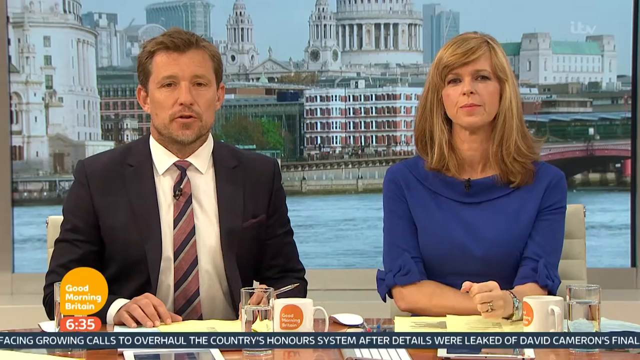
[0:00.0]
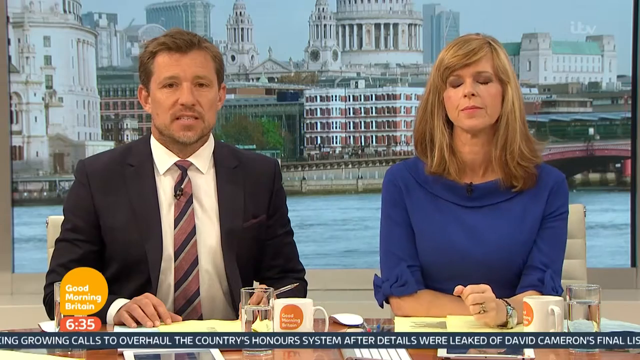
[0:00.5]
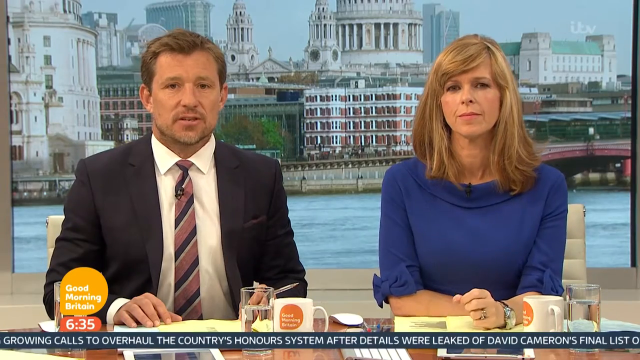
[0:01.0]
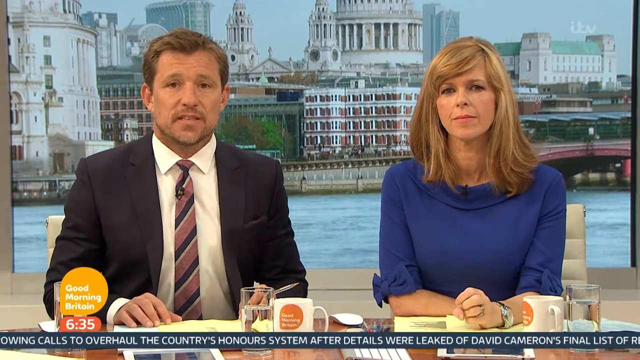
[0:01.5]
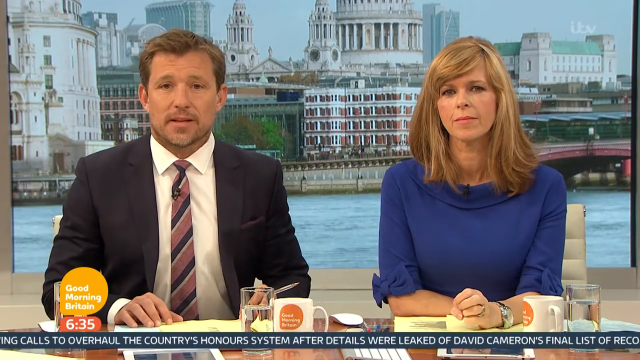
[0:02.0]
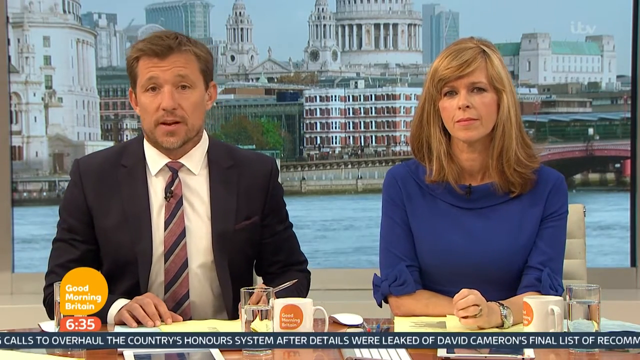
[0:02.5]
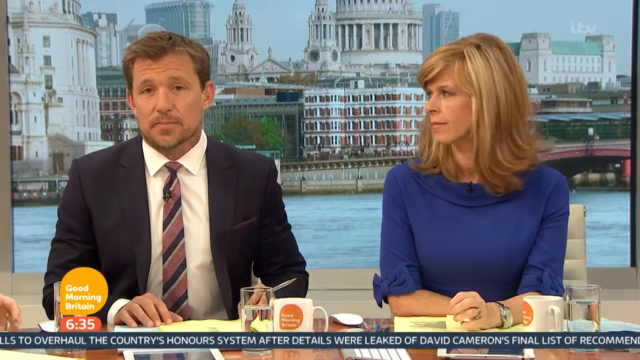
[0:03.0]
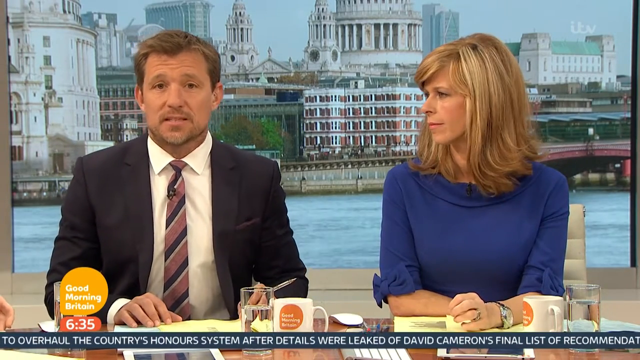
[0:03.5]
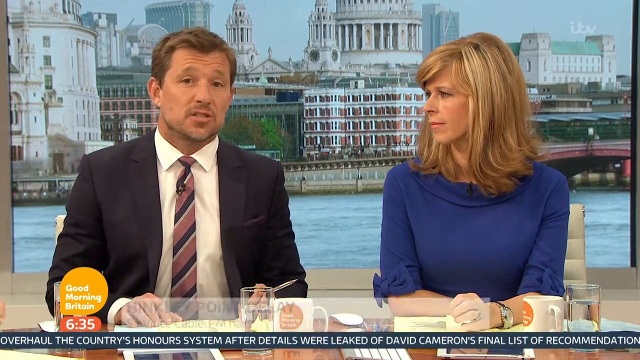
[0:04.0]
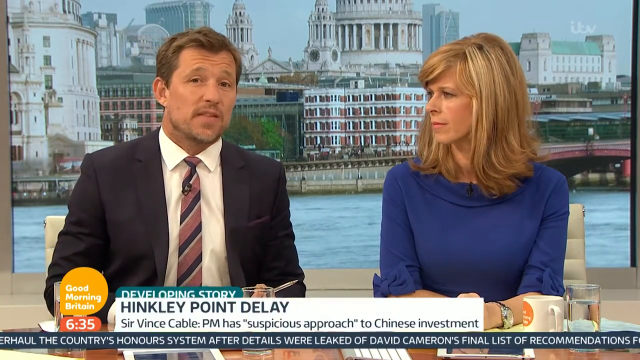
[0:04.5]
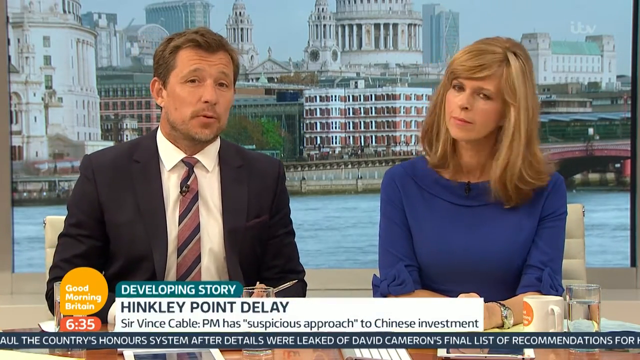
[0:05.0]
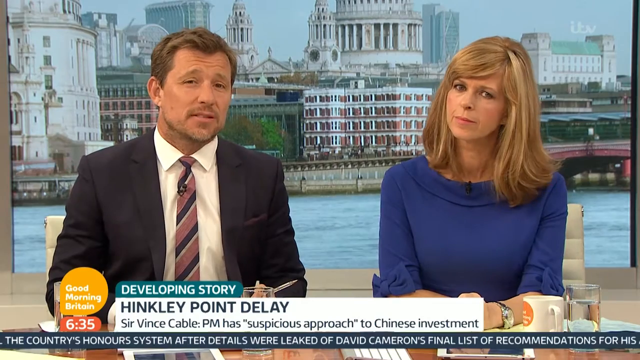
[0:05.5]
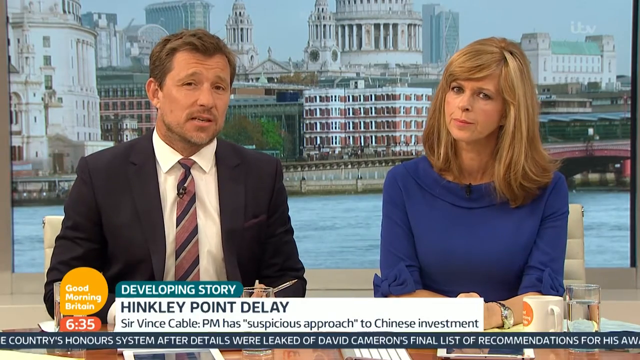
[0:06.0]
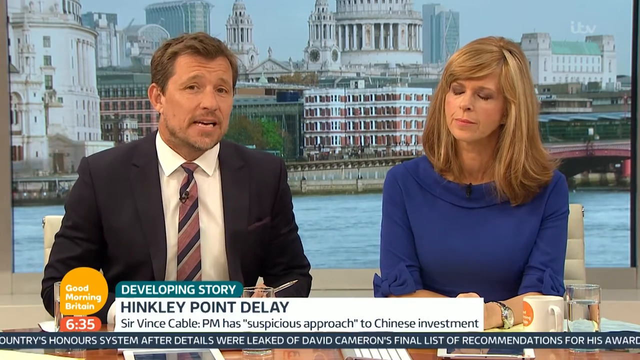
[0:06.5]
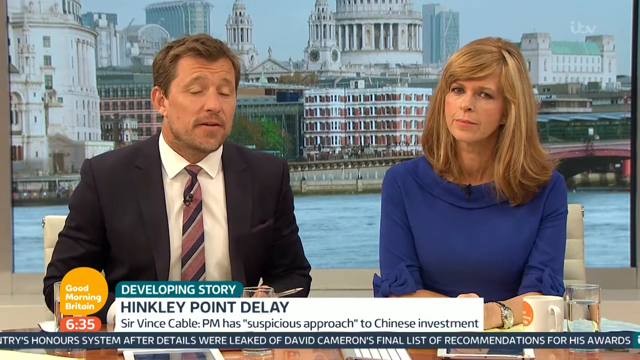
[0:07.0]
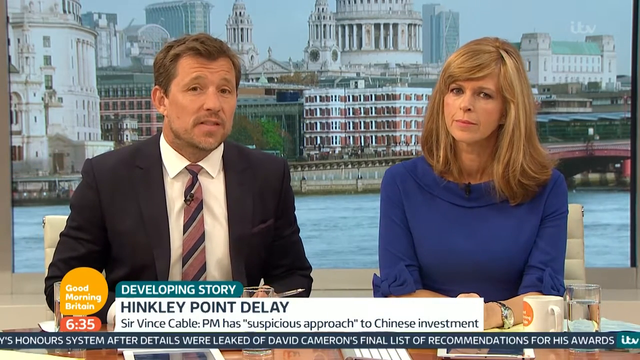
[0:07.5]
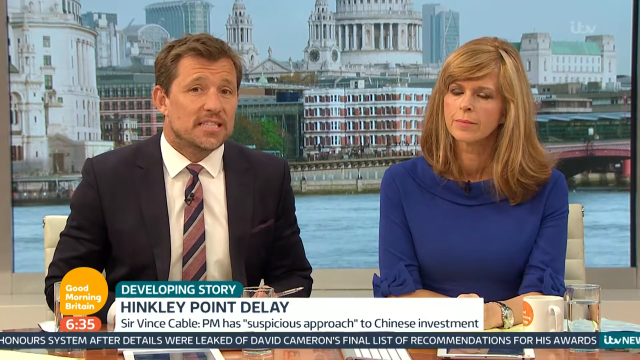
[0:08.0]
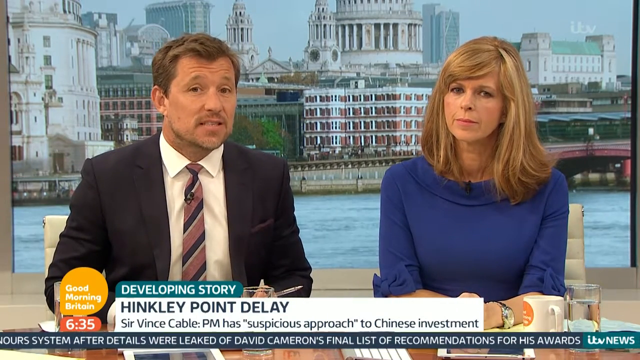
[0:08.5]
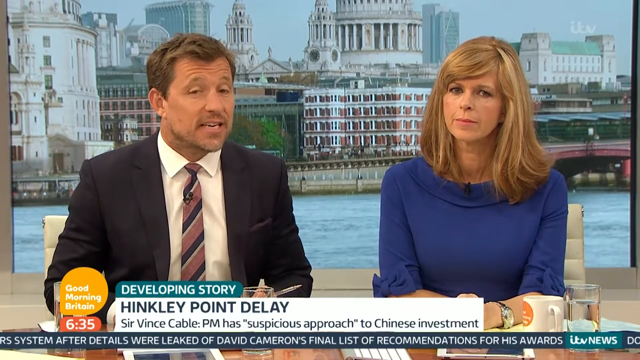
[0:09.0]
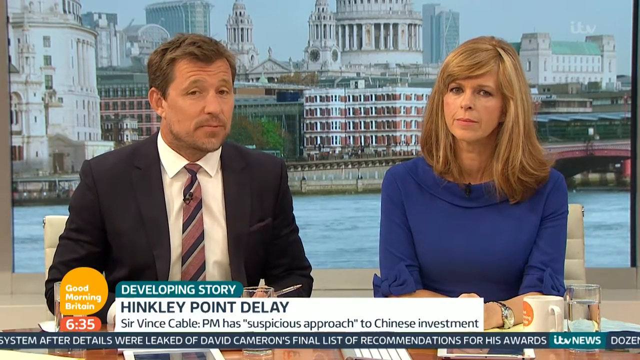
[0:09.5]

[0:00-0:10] Two news presenters from Good Morning Britain appear: a woman with shoulder-length blonde hair in a blue top, and next to her a man wearing a dark blazer, a coloured stripy tie and a white shirt. The backdrop of the newsroom shows the River Thames and various buildings. They report on a developing story about Chinese investment. Cups and drinks are on the table in front of them, and the man in the dark blazer holds a pen.